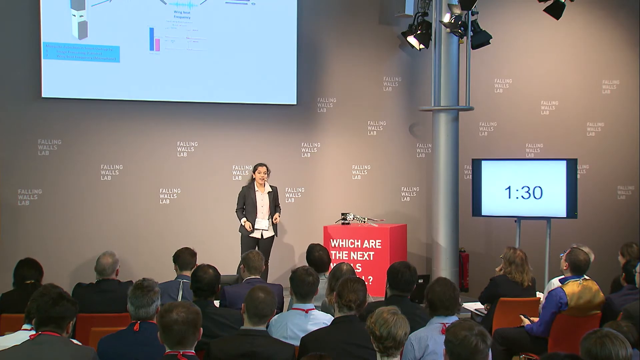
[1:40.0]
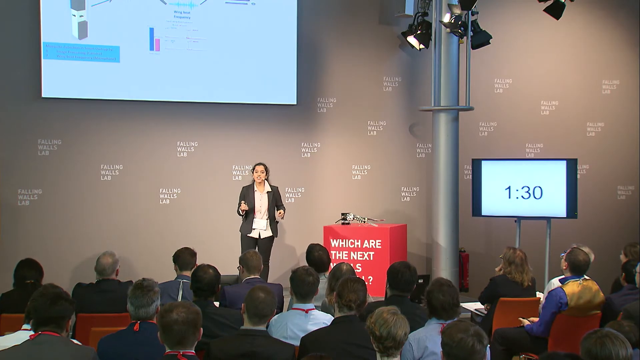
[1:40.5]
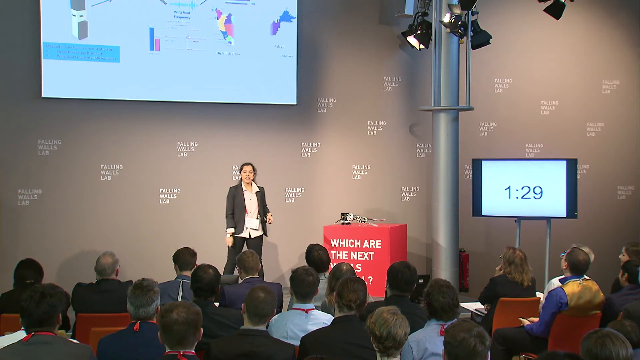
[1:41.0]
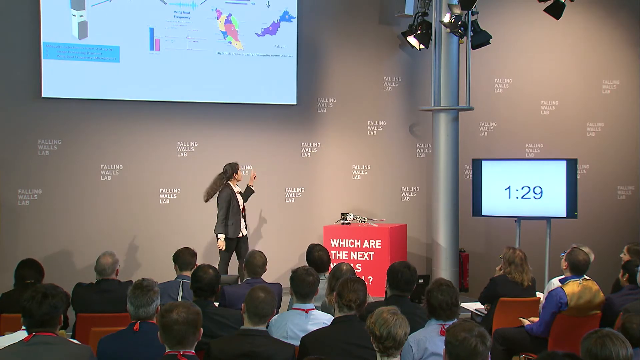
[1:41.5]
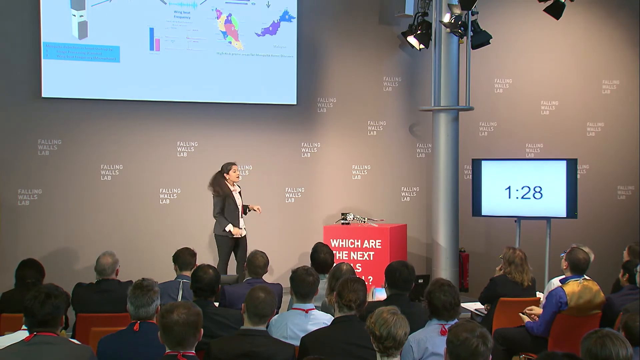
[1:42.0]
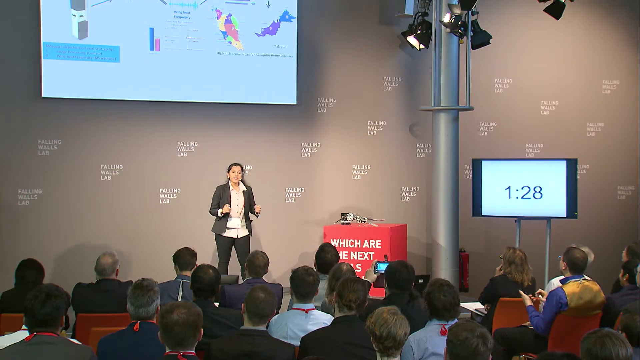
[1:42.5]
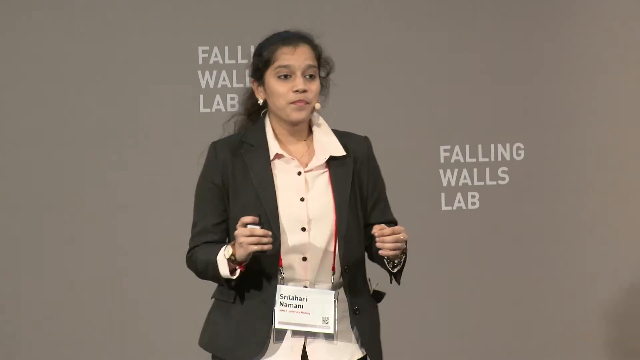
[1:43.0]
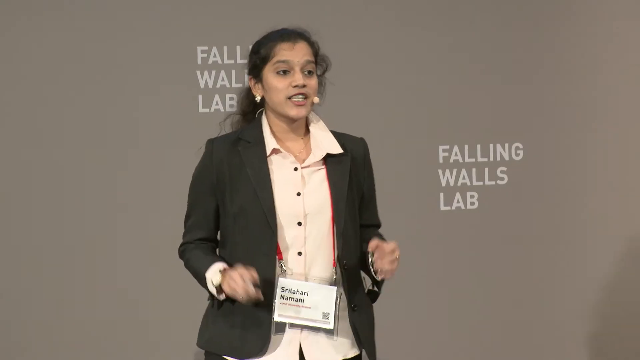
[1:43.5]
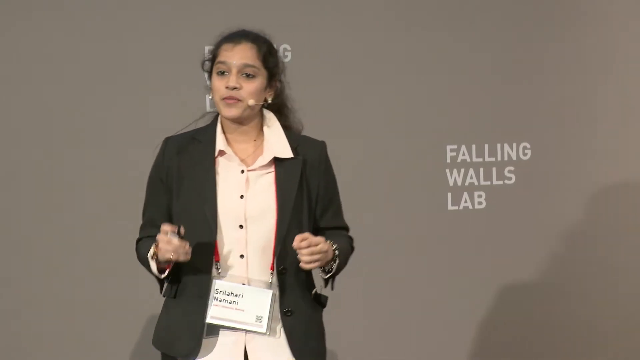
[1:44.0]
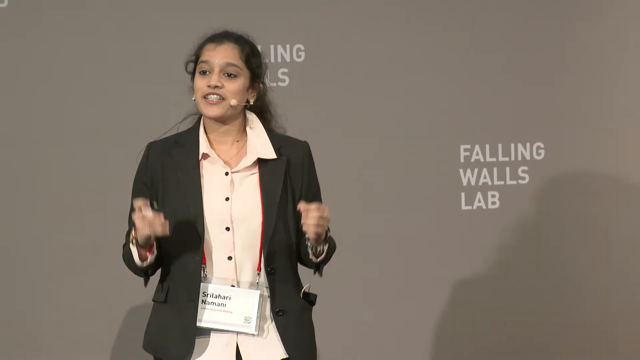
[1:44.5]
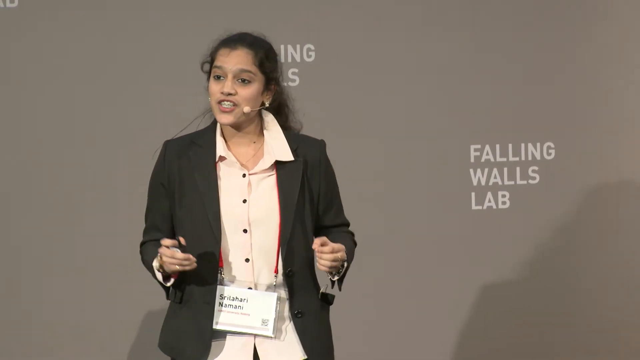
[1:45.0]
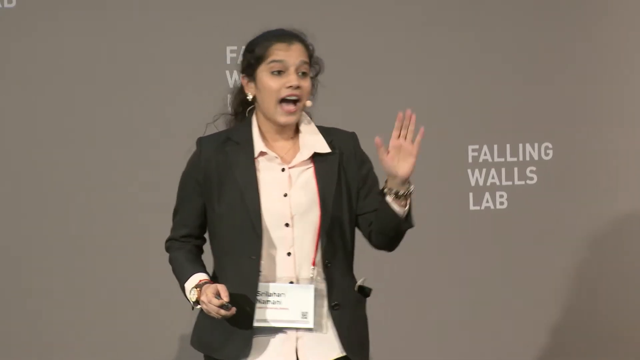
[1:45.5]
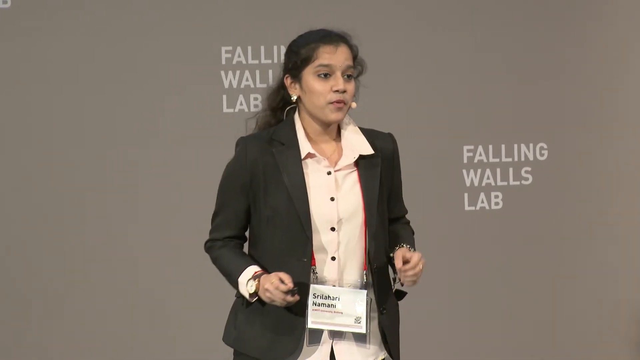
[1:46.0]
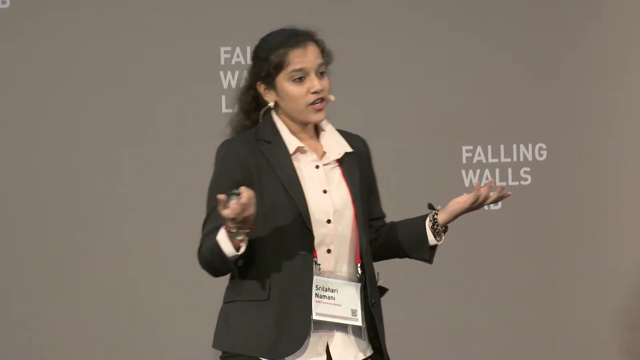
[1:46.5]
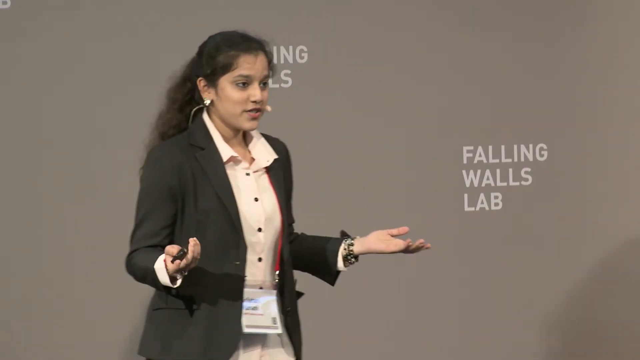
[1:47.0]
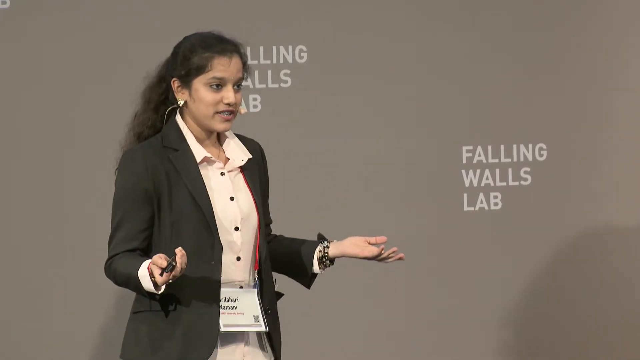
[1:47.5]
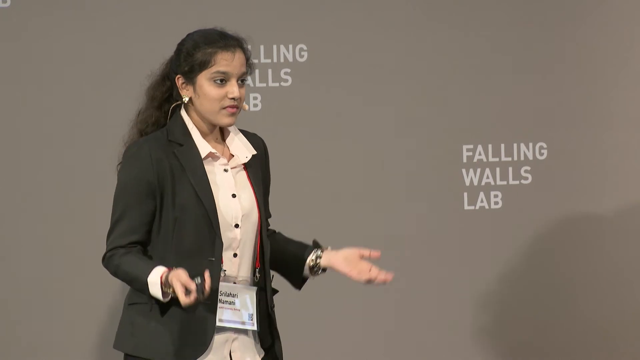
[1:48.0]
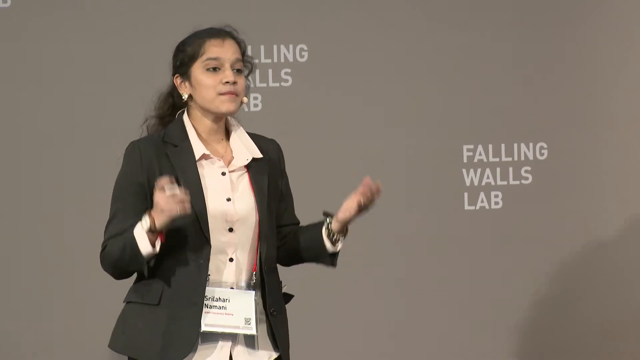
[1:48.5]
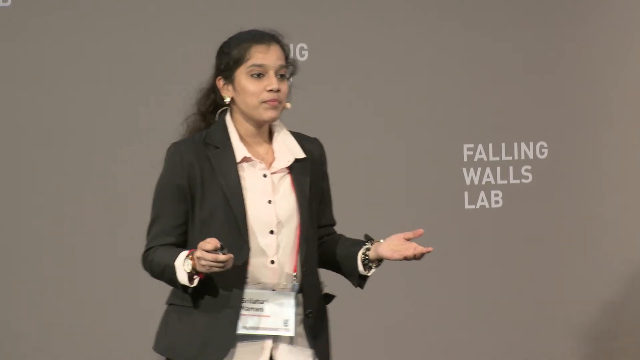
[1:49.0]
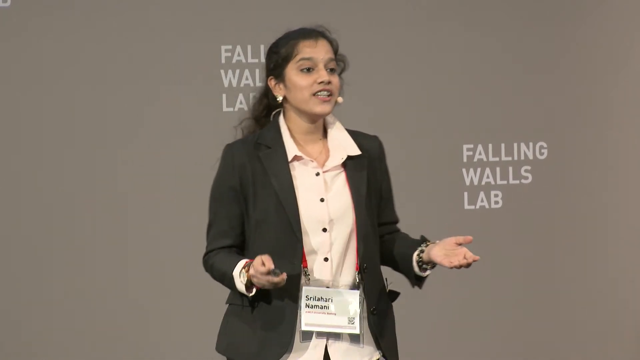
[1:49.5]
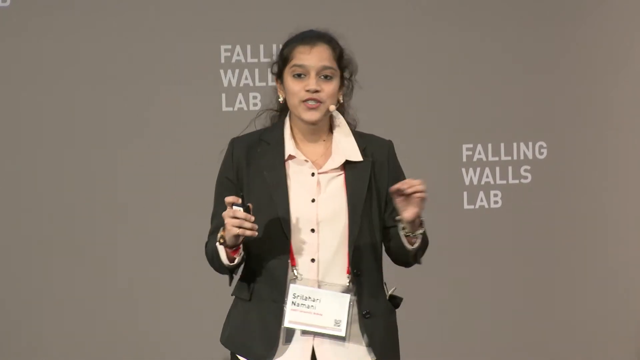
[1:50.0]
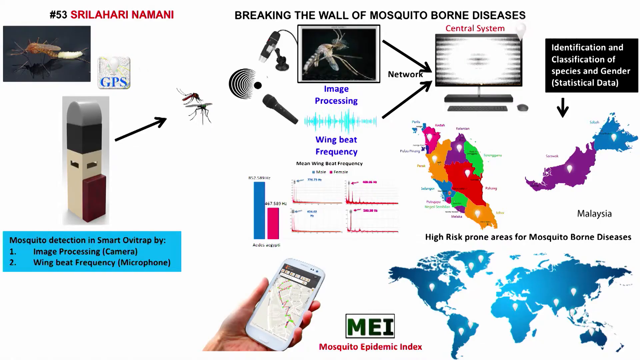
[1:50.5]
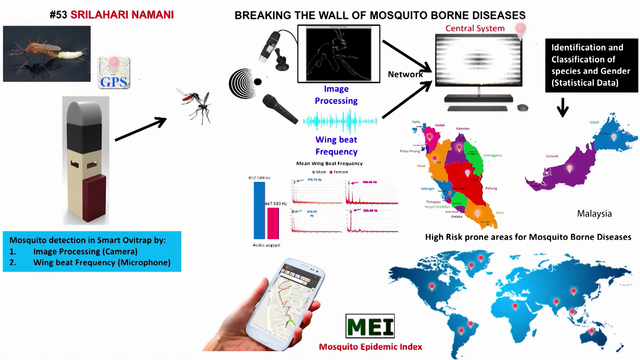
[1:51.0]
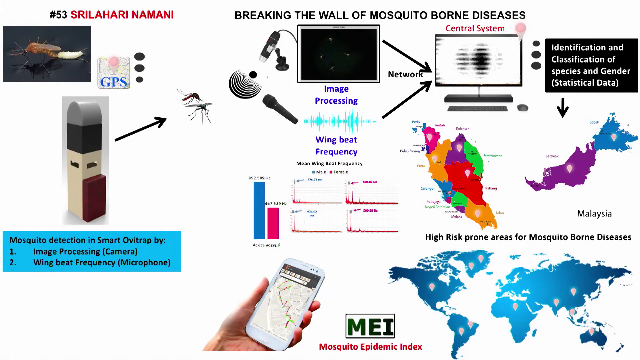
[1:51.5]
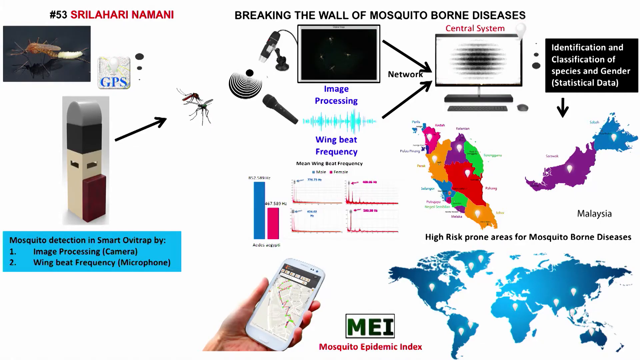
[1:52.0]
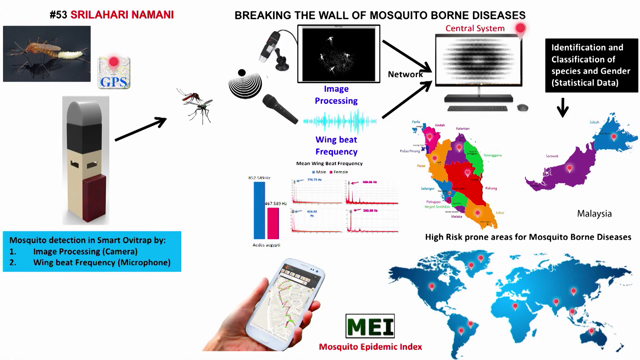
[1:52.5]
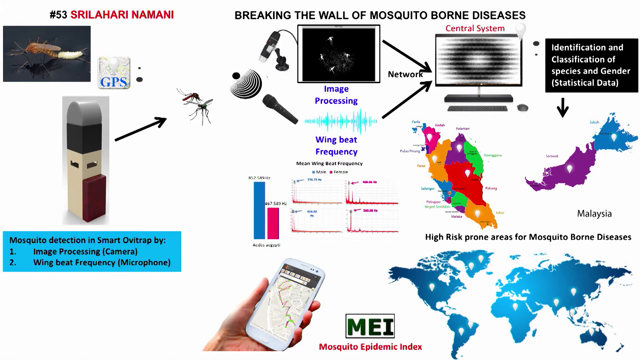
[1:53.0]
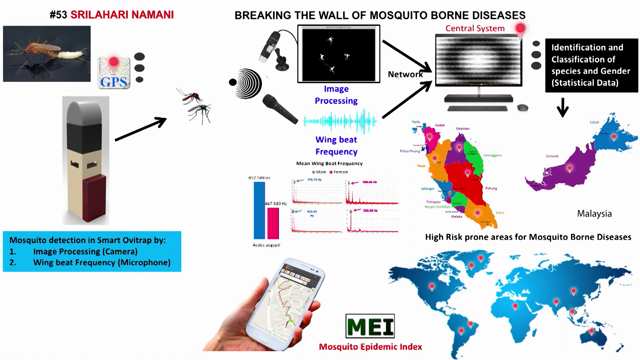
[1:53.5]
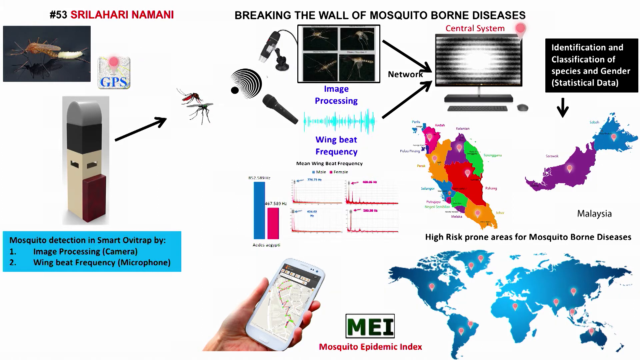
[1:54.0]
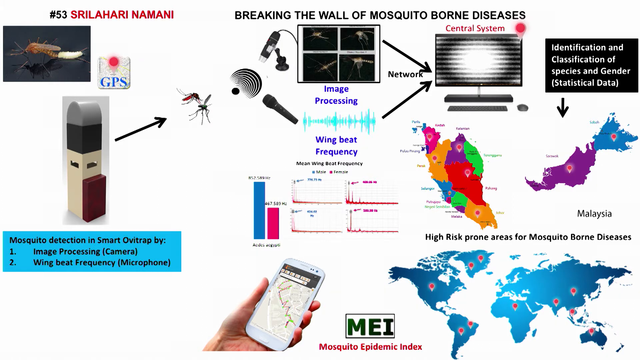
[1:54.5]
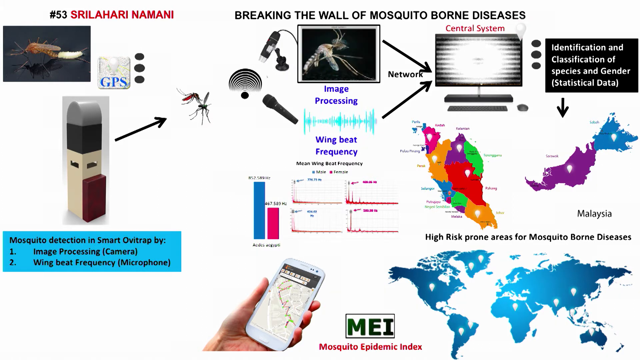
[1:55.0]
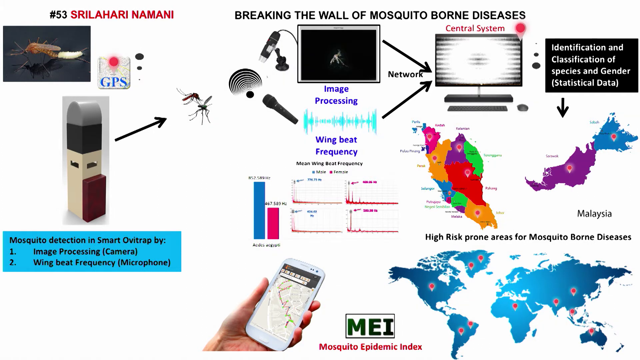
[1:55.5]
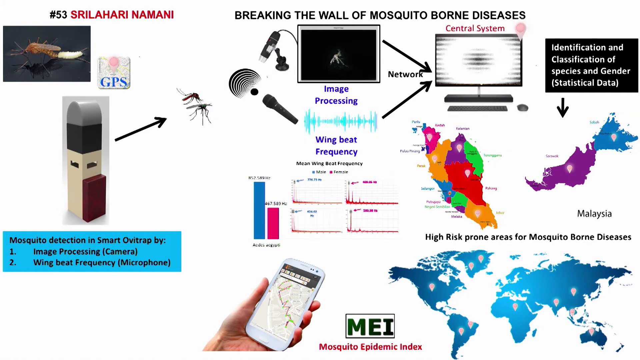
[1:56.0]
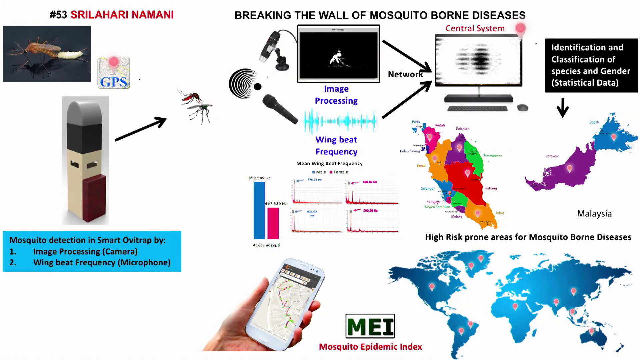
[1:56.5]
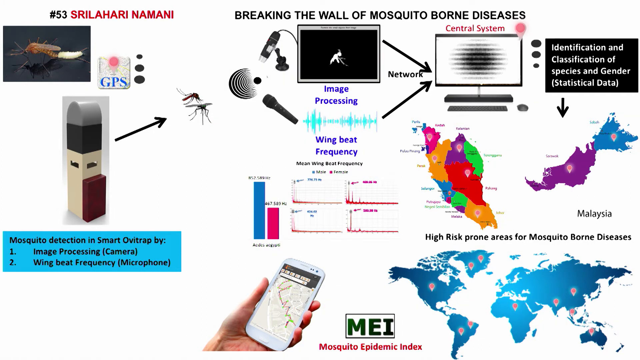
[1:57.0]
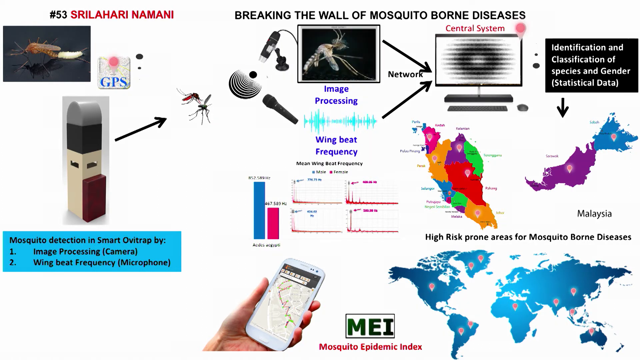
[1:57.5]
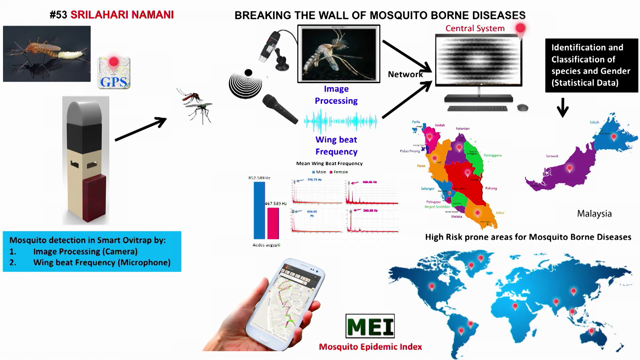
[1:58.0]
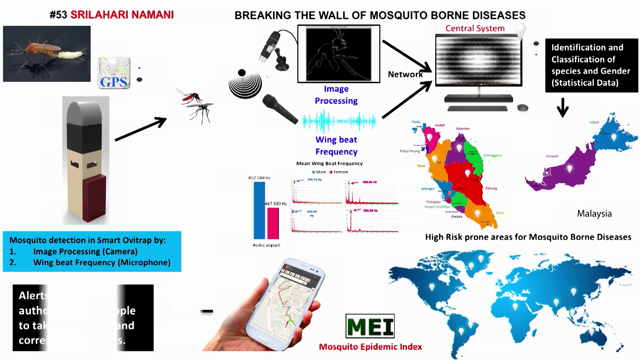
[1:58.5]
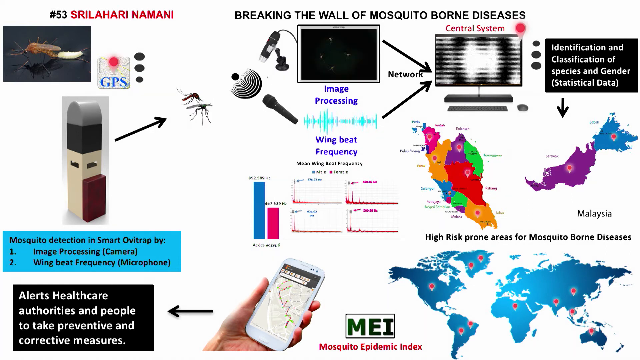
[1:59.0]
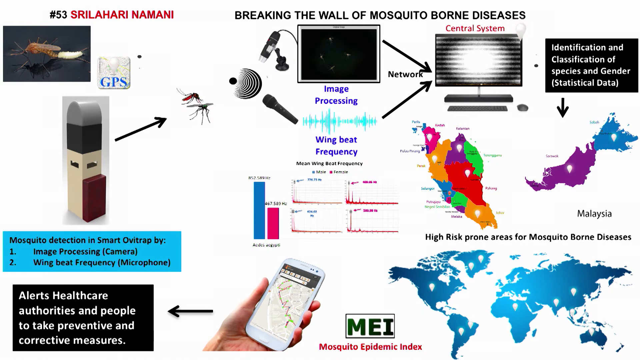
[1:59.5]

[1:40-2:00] The camera zooms out. The TV is at her far left, on the viewer's right, and now shows "1:30", which could be 1 minute and 30 seconds or 1 hour and 30 minutes; its purpose is unclear. The presentation is visible on the board just above her head, and the two columns from the earlier slide can still be seen there, much more faintly. She clicks something and the picture on the screen above her changes. The video cuts away from the picture to her, and then back to the presentation. The slide now shows the rest of the device and how it was put together. It demonstrates a sort of sonar: a black dot with larger, almost wave-like black circles extending leftwards.